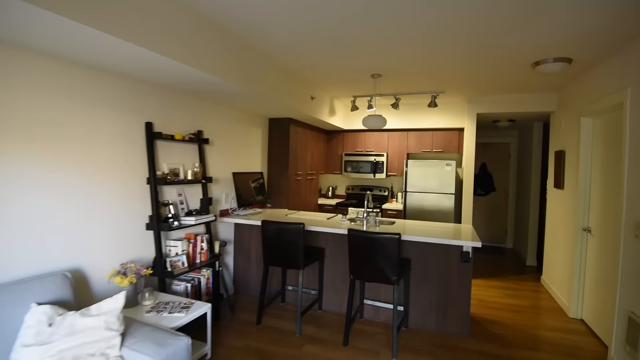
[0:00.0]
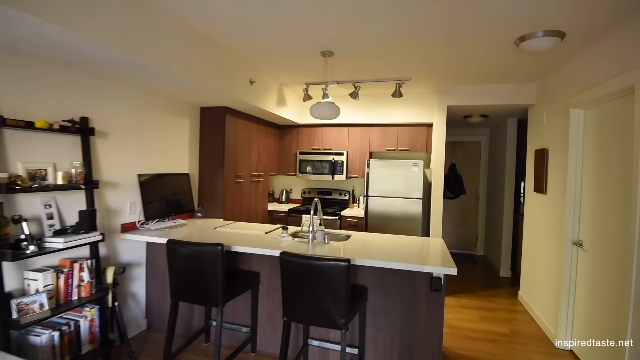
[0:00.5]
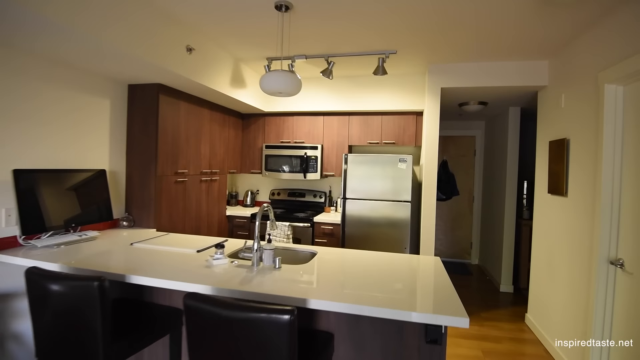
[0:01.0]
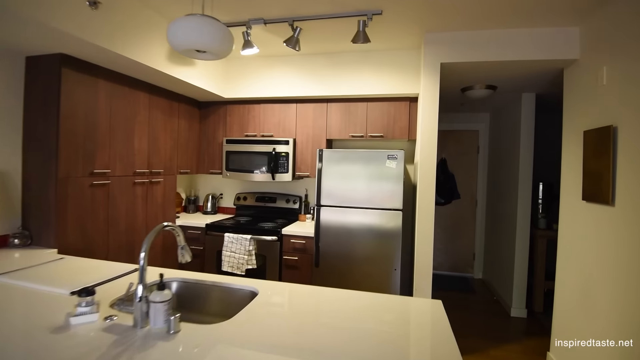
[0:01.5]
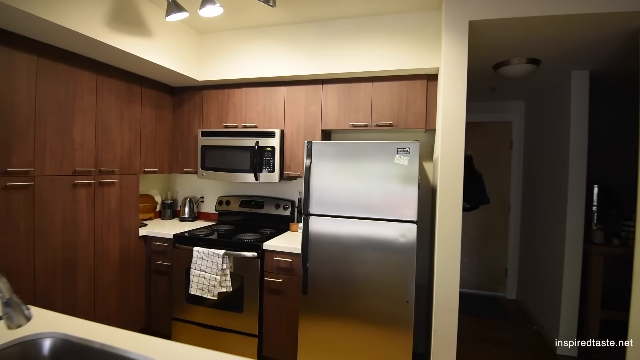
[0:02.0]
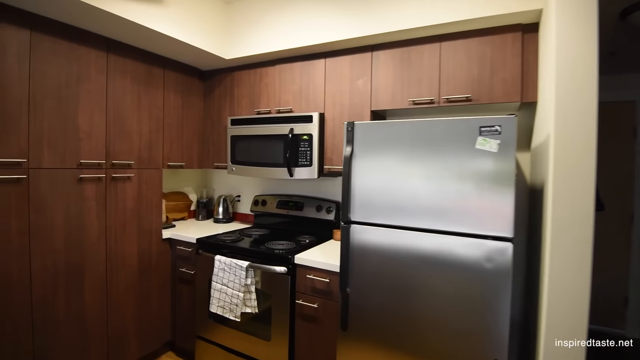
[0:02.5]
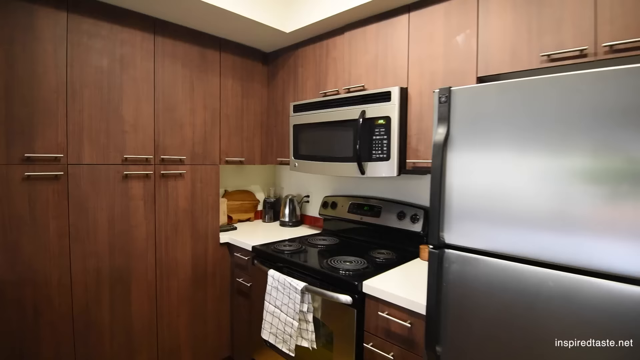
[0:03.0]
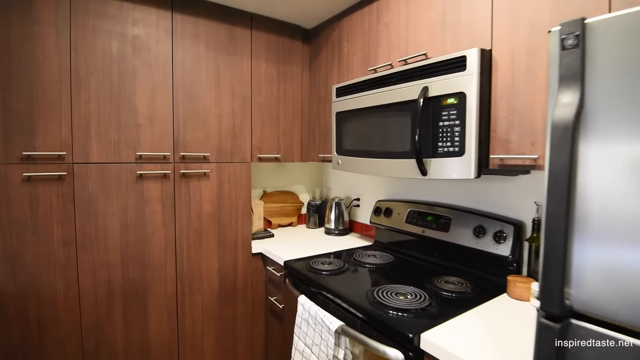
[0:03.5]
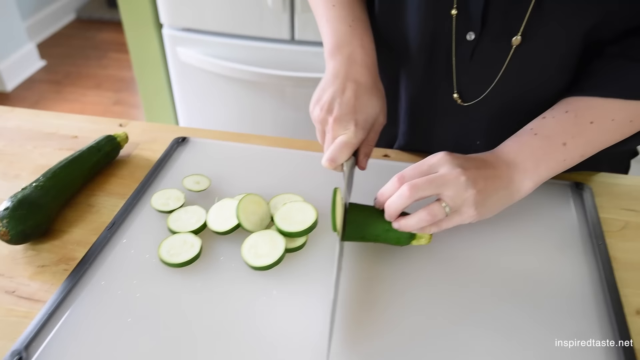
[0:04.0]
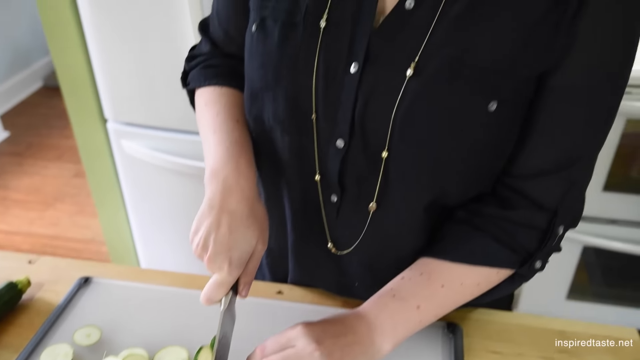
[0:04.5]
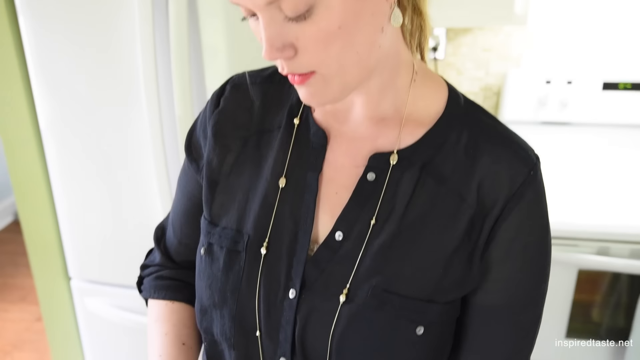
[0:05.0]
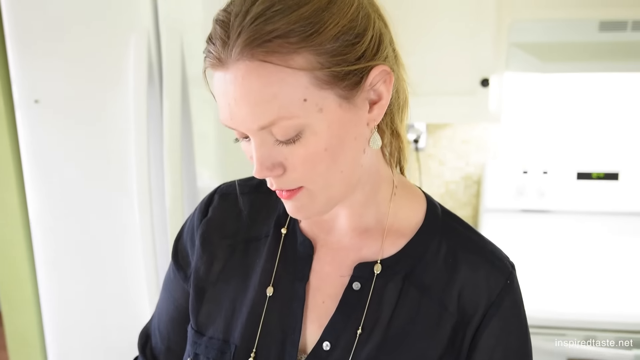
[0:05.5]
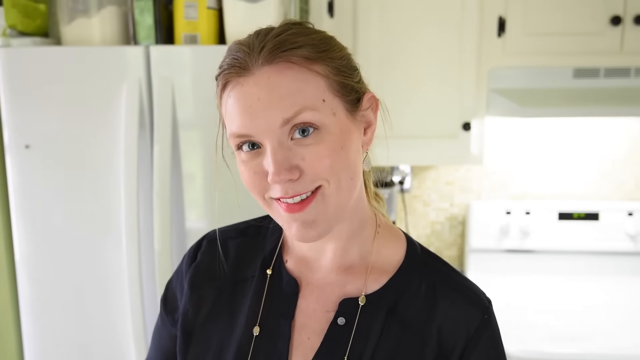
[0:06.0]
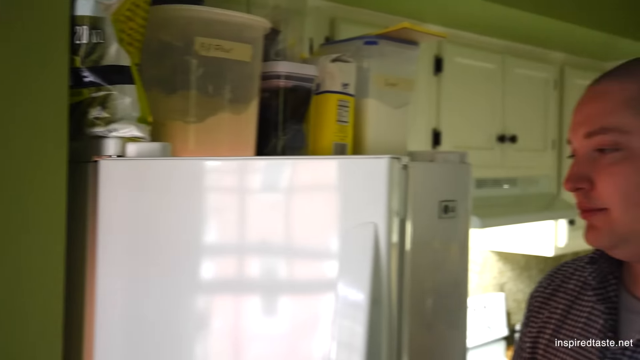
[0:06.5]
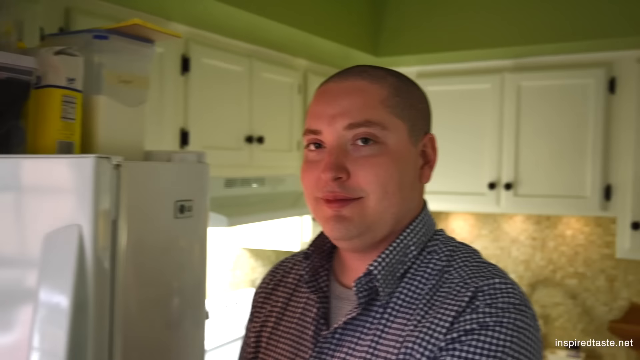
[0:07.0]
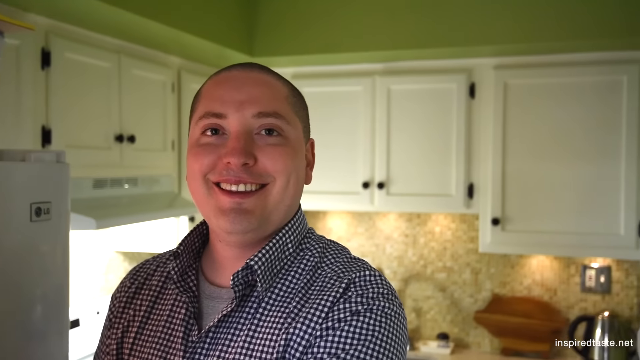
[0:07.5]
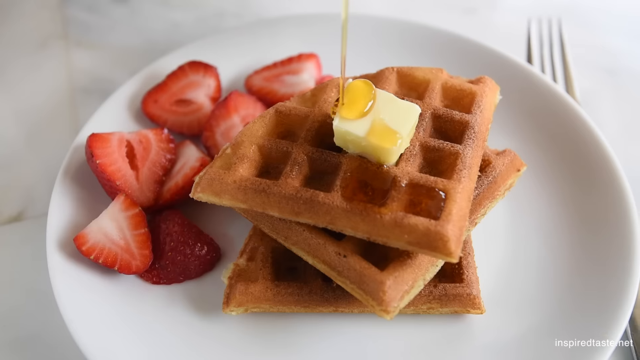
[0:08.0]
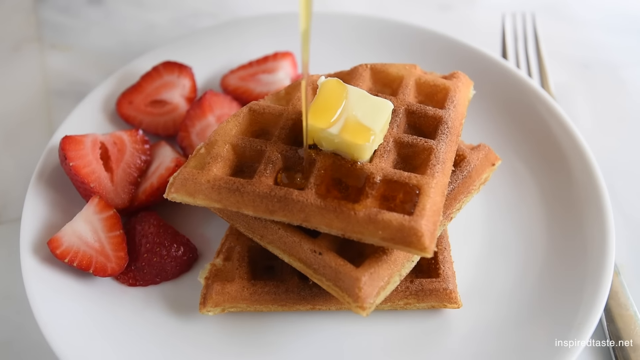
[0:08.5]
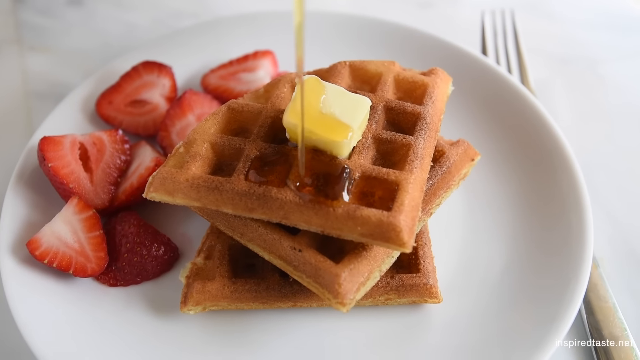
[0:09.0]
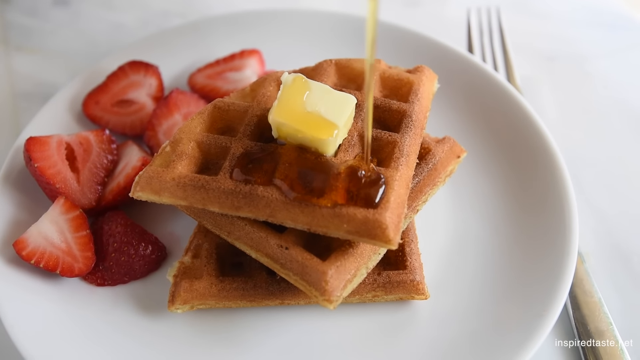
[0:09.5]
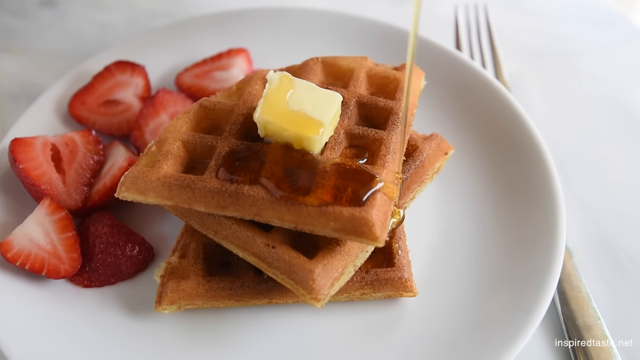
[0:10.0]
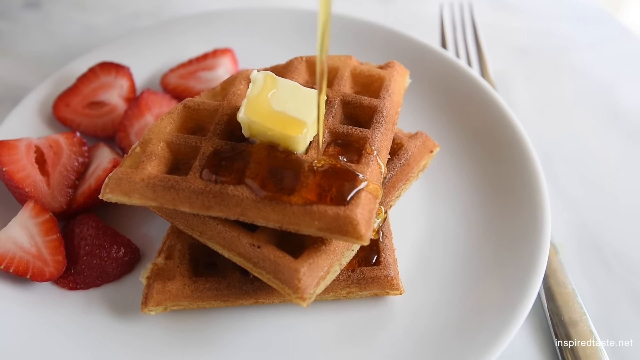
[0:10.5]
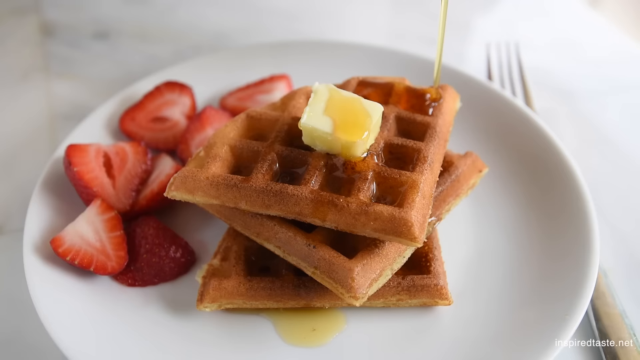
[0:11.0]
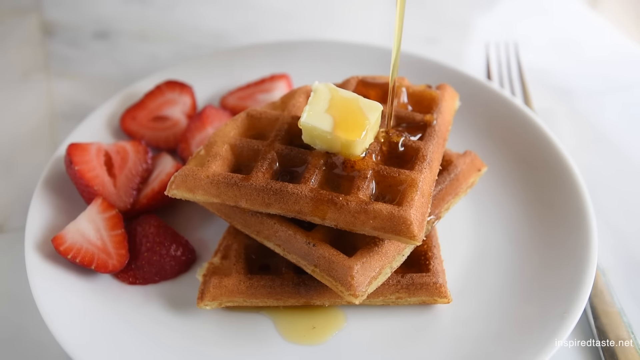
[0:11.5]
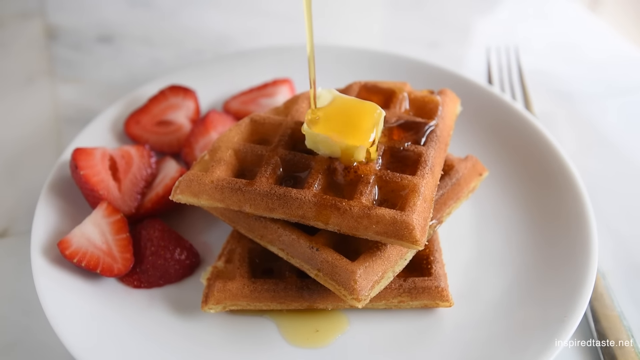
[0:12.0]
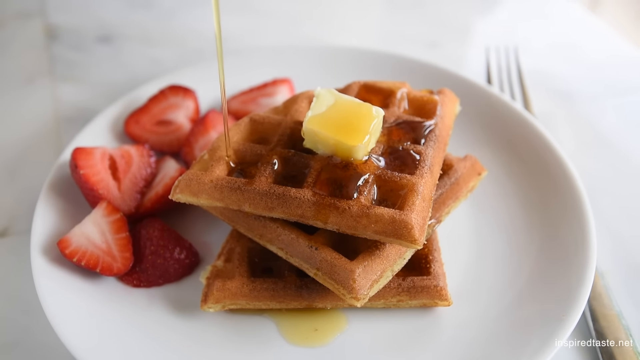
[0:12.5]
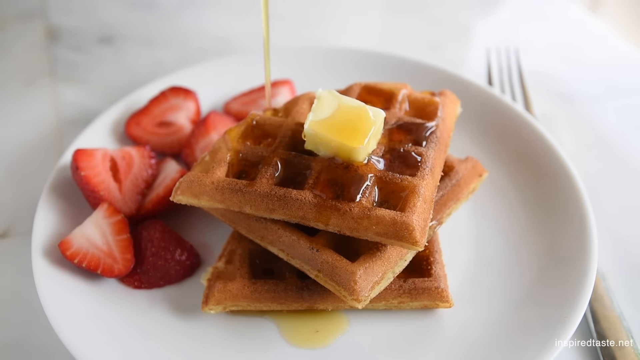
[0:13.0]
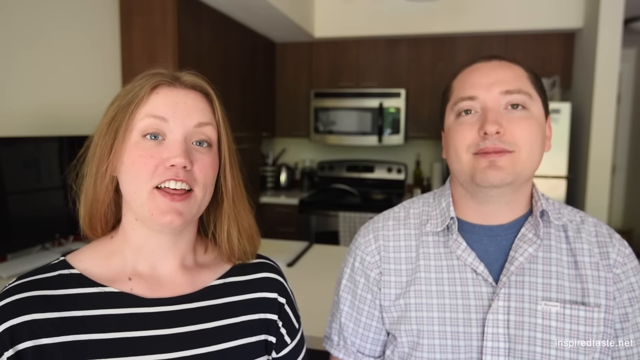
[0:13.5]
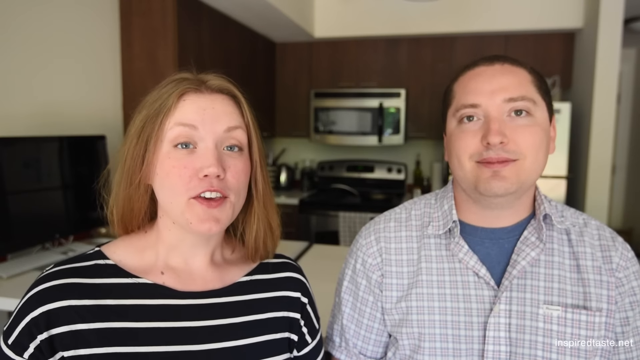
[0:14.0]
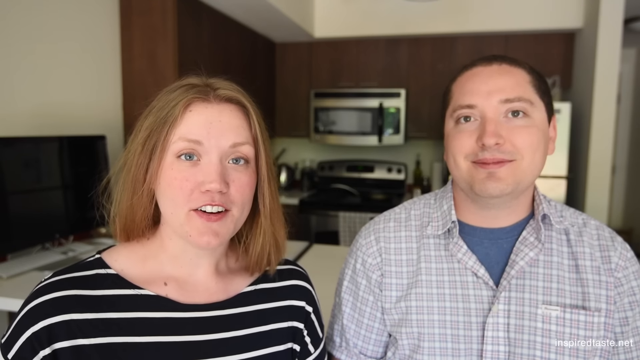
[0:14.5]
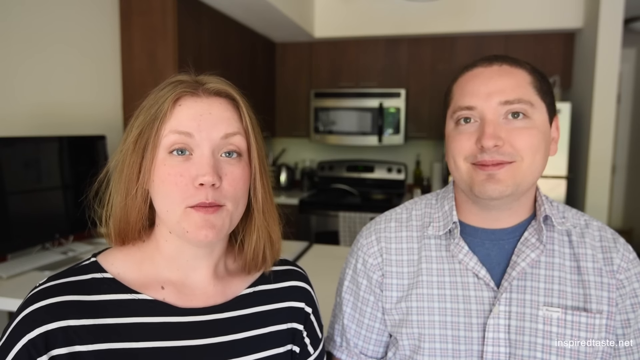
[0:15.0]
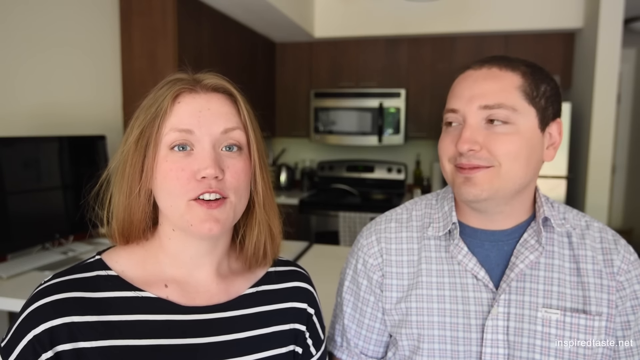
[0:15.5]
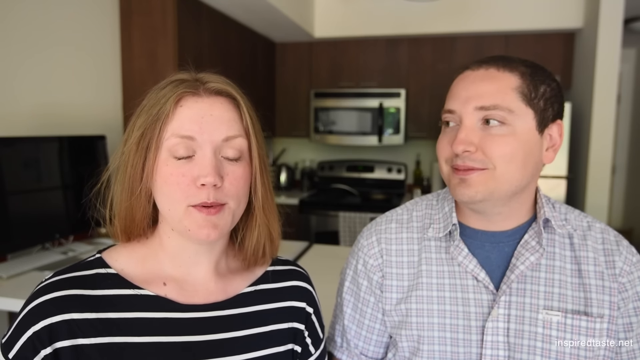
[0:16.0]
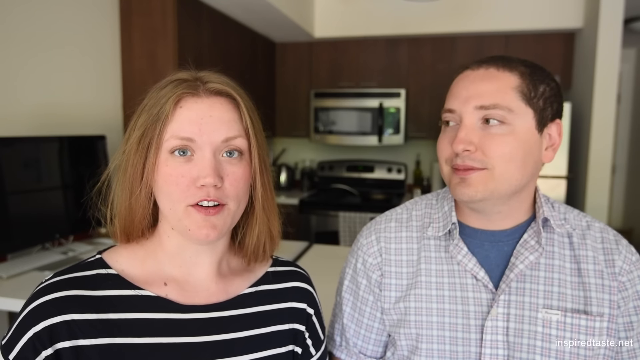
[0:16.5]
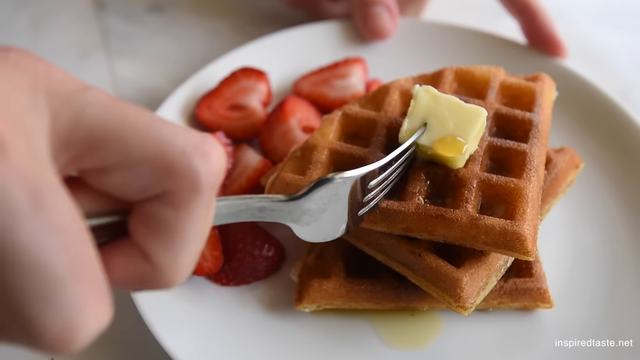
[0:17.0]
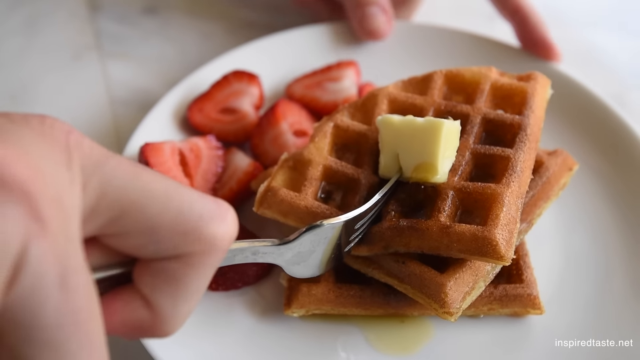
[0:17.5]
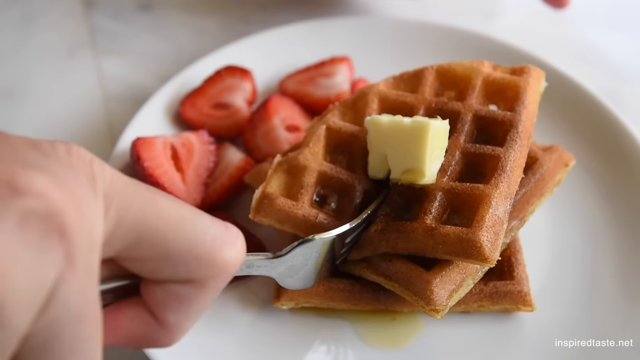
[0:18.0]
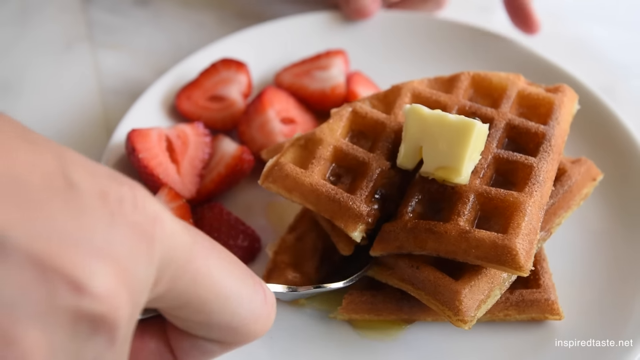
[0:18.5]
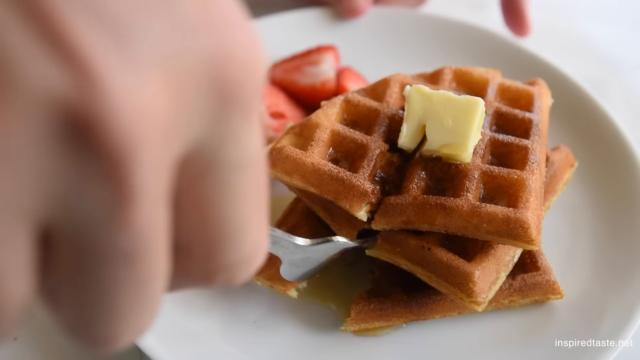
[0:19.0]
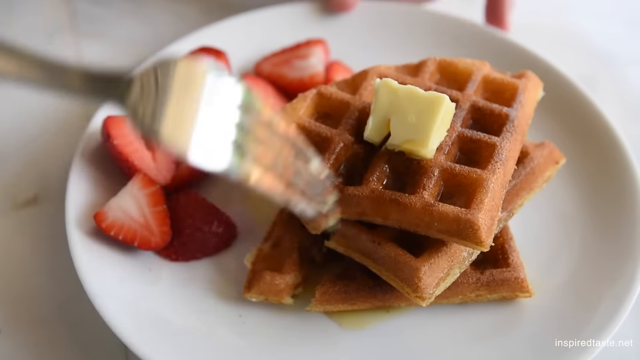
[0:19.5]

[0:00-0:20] The camera pans through a kitchen with a lot of stainless steel and focuses on a blonde woman and a man in a plaid shirt, who appear to be a couple, maybe boyfriend and girlfriend or husband and wife. A plate holds three waffles with butter on top and some strawberries on the side, and syrup is poured over the waffles and butter. The camera pans in to the woman and the man talking, and then the waffles are cut with a fork. The person cutting is right-handed, using their right hand to push the fork down through all three layers, which kind of squashes the waffles down. Afterward the man and the woman stand there talking together. A "subscribe now" button is at the bottom.